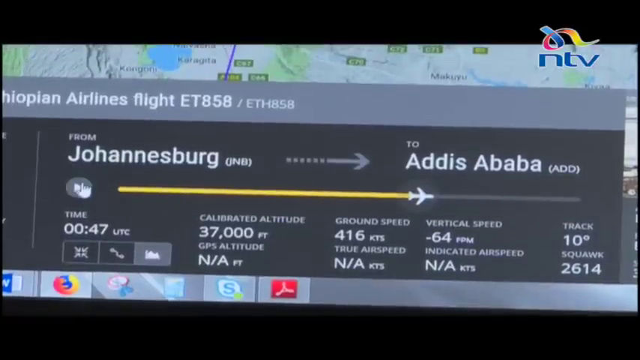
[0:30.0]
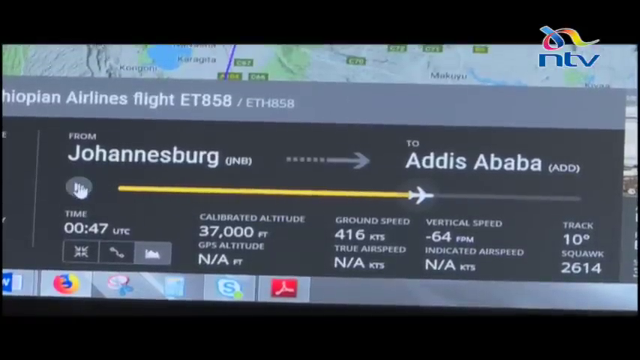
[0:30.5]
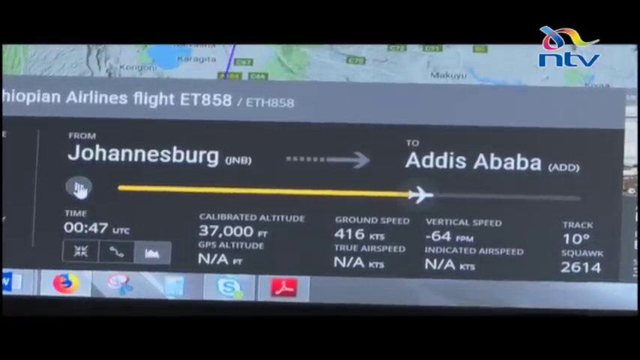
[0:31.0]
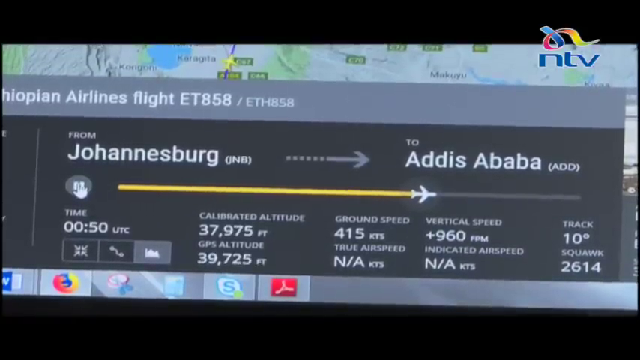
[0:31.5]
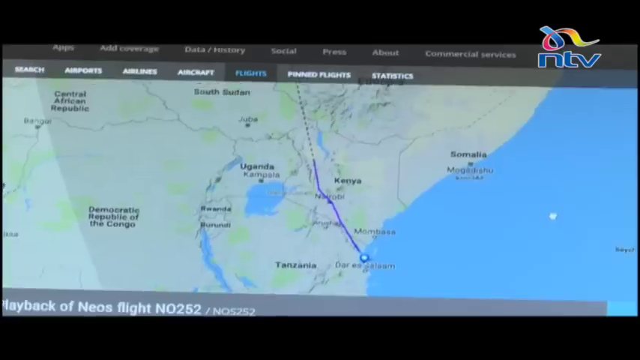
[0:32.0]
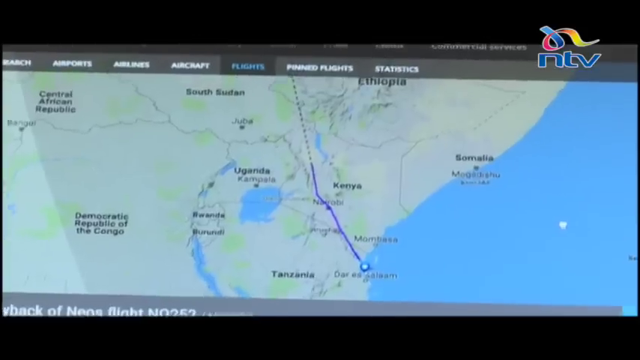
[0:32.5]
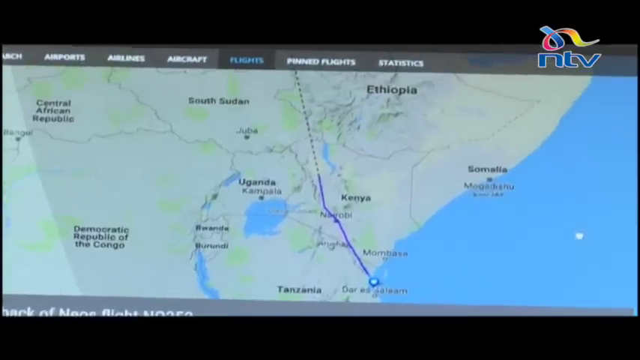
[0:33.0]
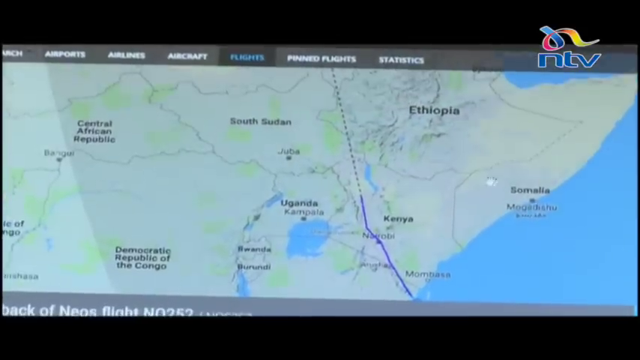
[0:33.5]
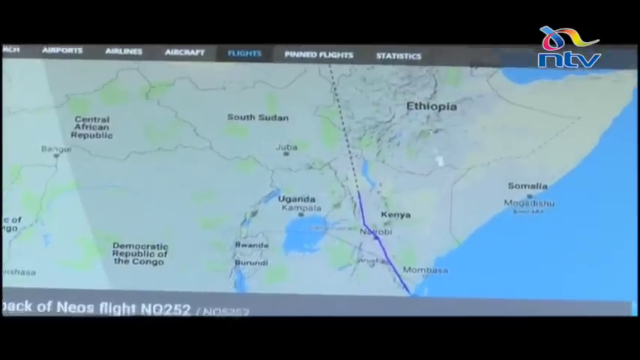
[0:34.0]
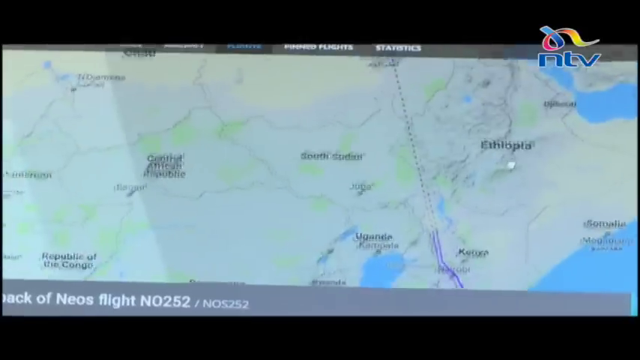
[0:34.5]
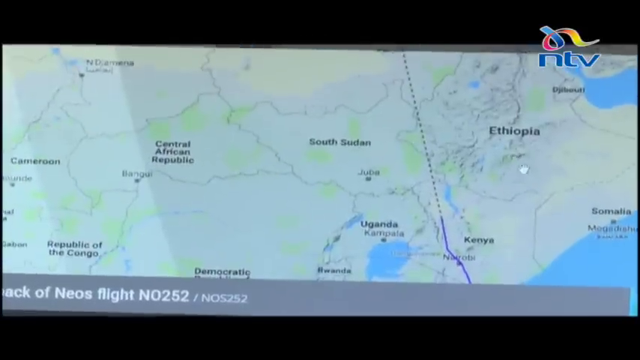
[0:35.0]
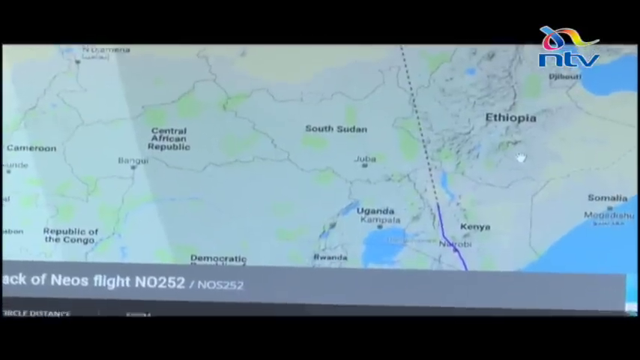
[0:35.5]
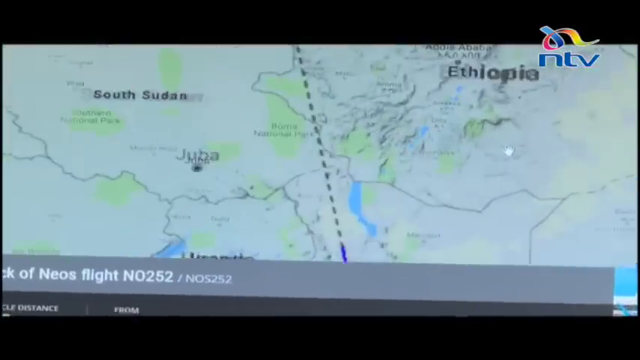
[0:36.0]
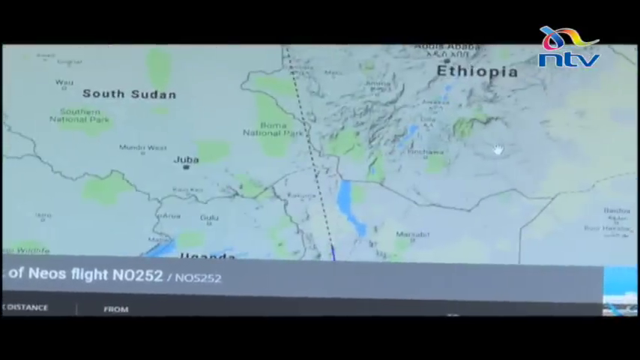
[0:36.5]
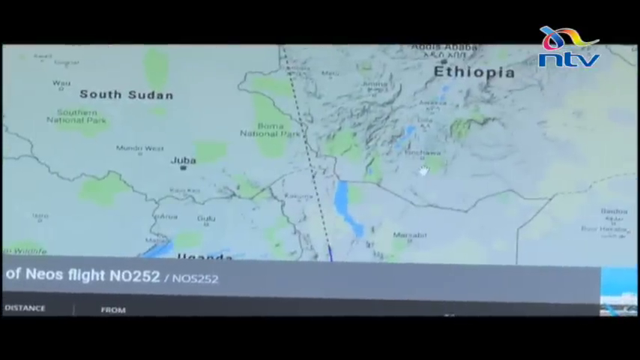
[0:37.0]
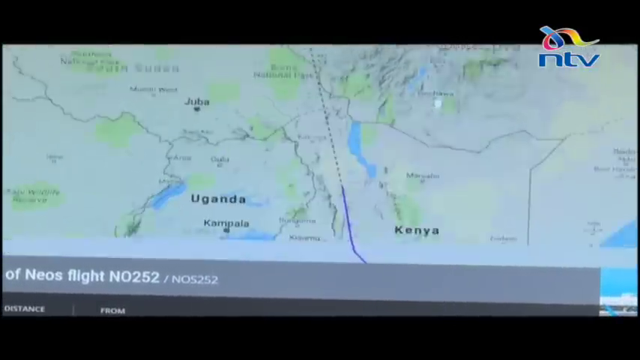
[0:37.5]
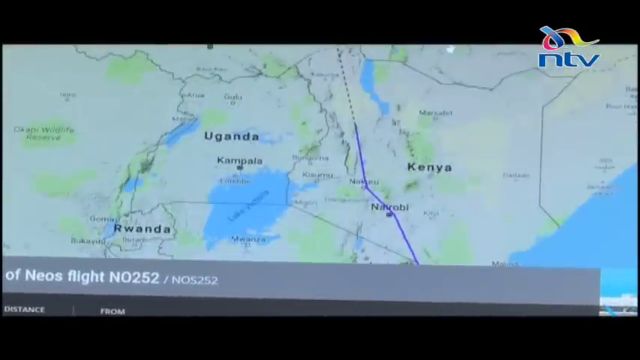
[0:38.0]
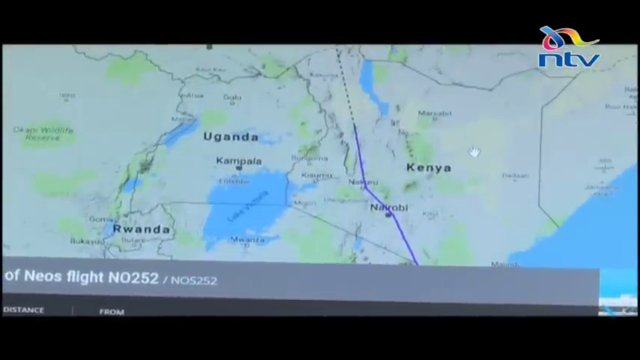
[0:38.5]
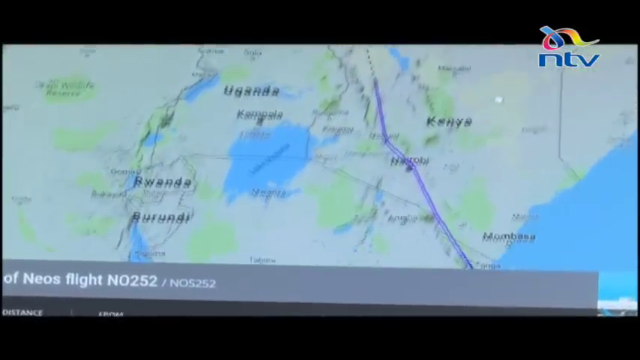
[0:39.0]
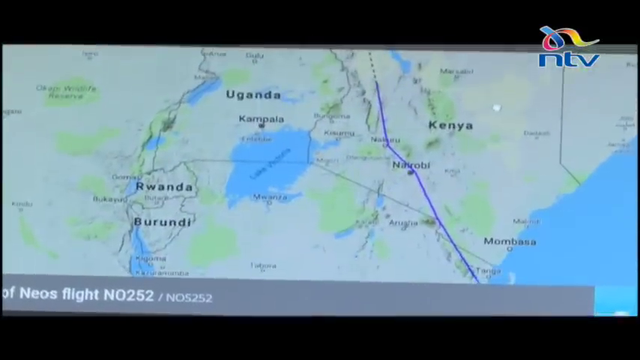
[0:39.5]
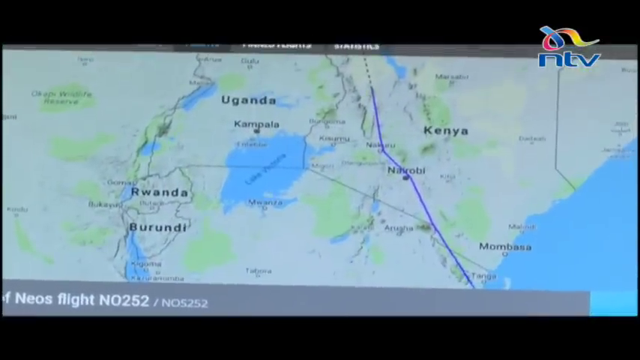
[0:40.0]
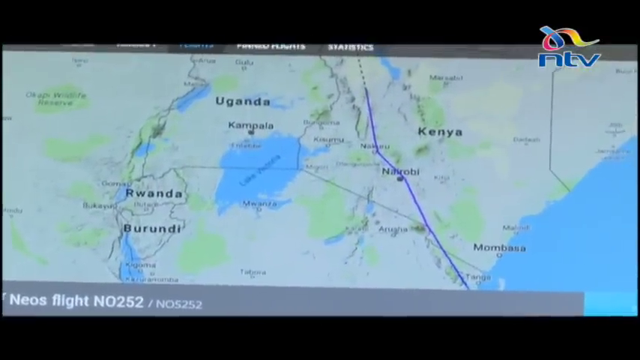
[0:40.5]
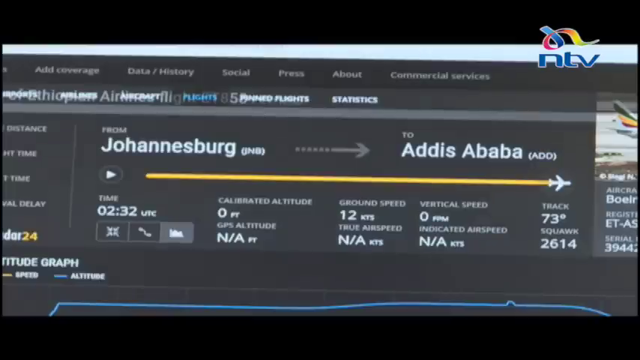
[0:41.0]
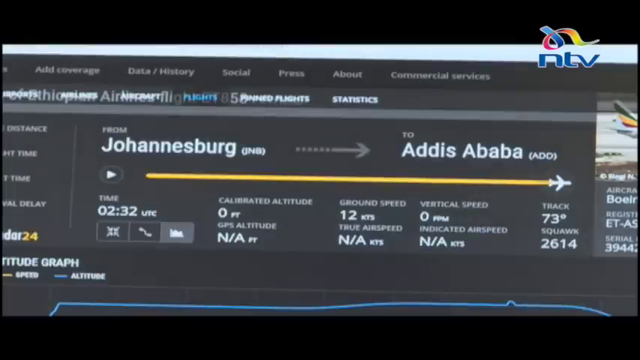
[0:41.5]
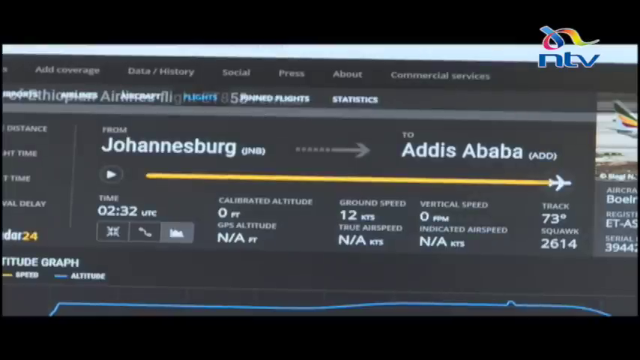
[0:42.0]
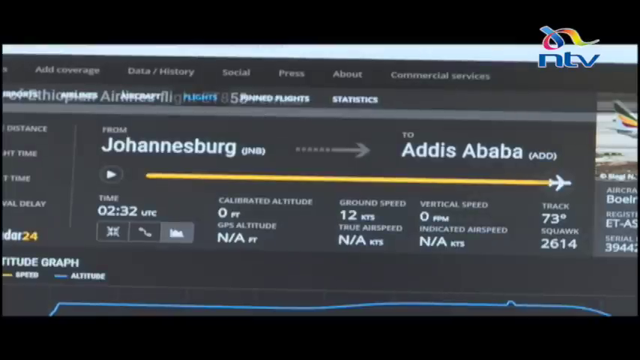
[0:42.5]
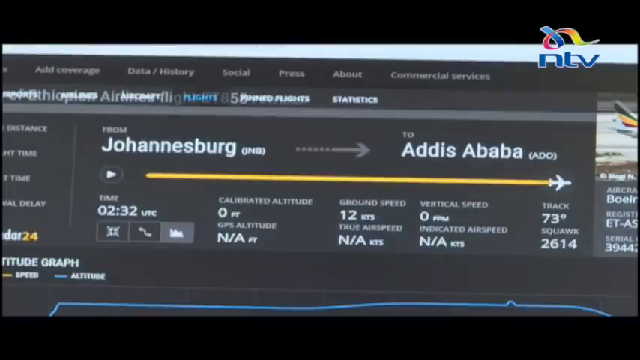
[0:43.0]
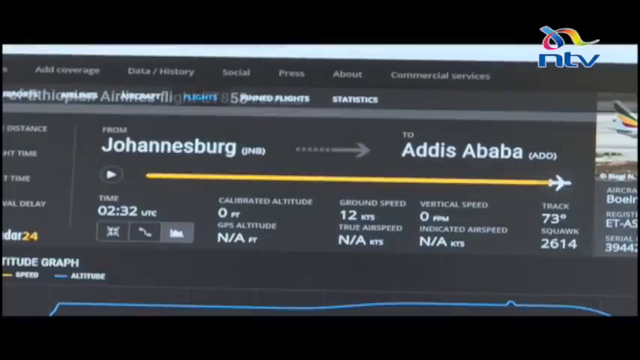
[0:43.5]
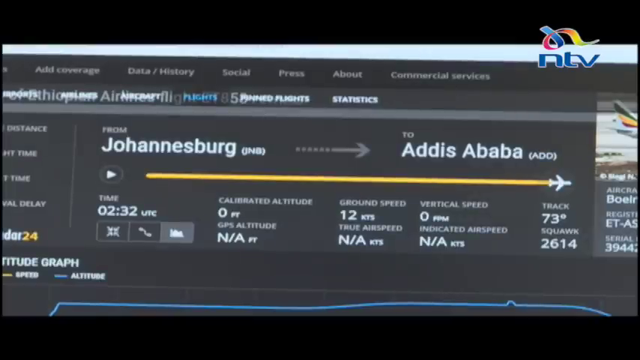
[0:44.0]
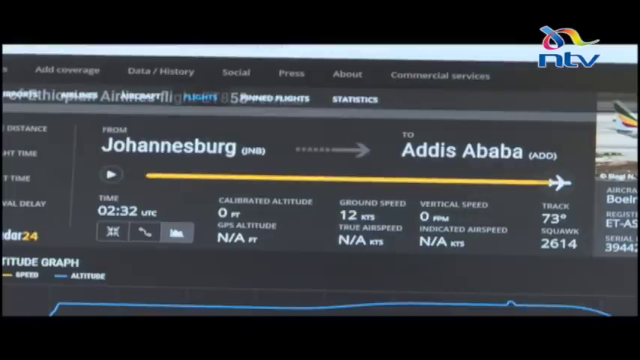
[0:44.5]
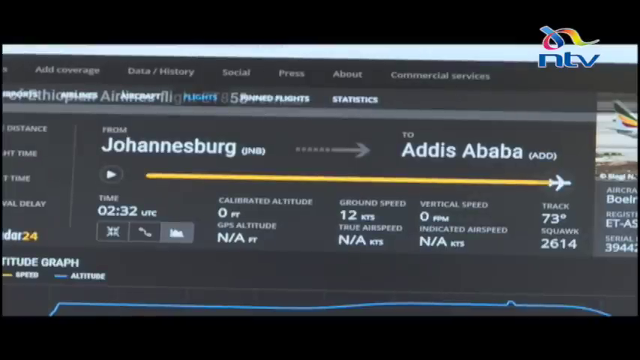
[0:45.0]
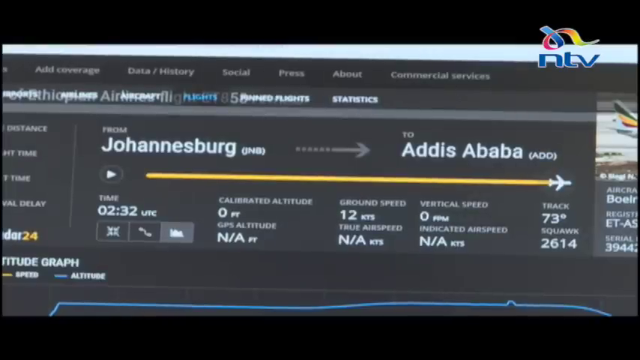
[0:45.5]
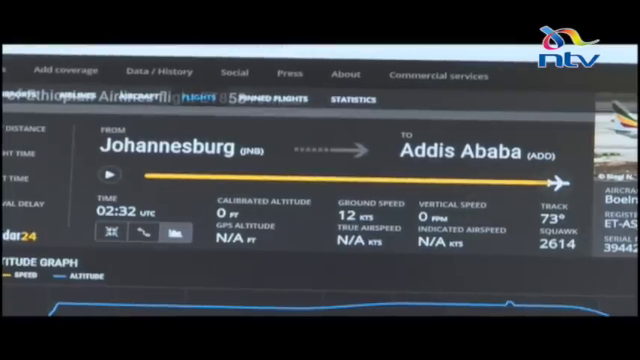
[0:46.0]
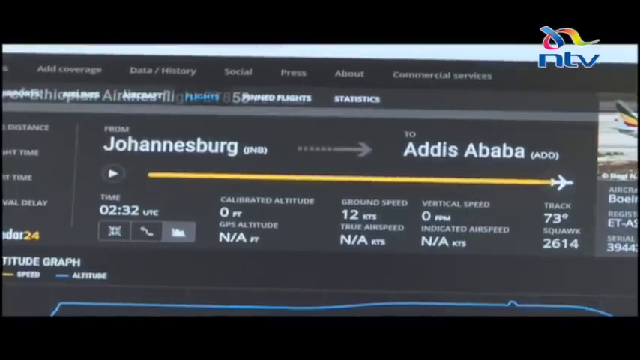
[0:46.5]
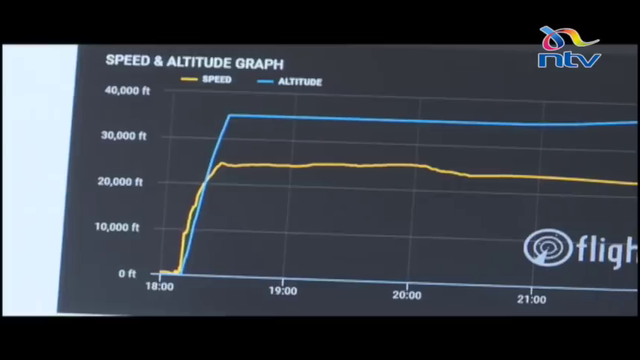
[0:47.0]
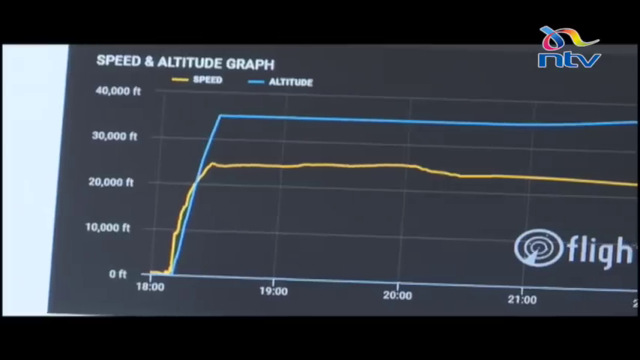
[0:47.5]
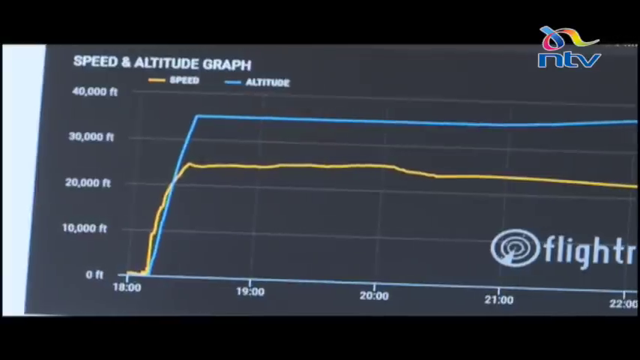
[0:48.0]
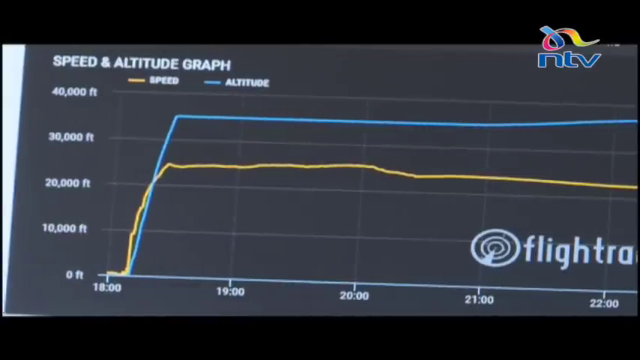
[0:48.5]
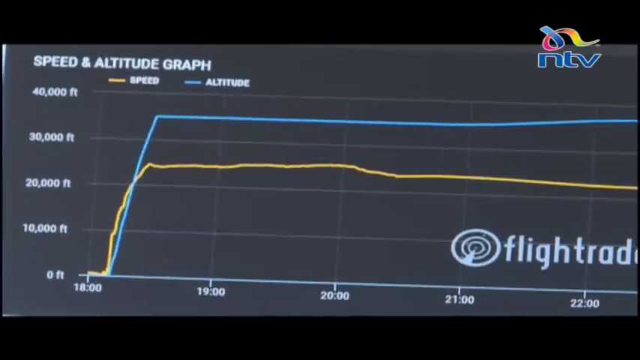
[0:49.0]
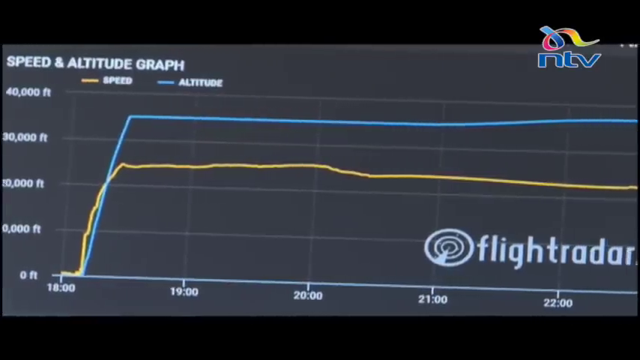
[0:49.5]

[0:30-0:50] A flight ticket from Johannesburg to Addis Ababa is shown on the screen, with a price, time, track, weight and speed indicated, along with information about the flight. The screen also shows speed, altitude, a graph, and a map on which different aeroplanes keep moving toward their destinations.